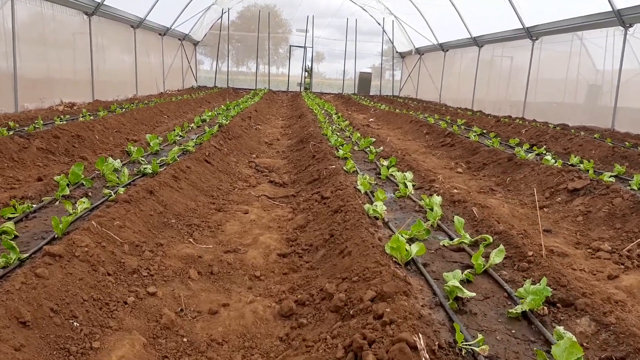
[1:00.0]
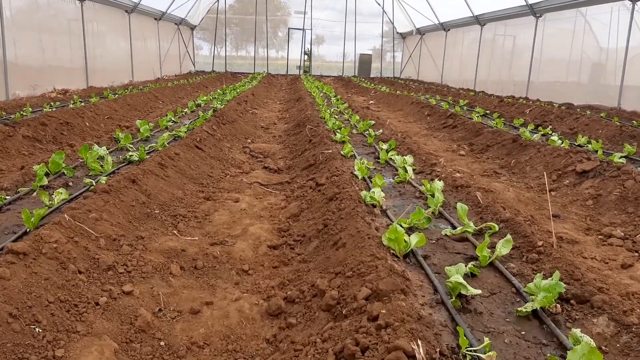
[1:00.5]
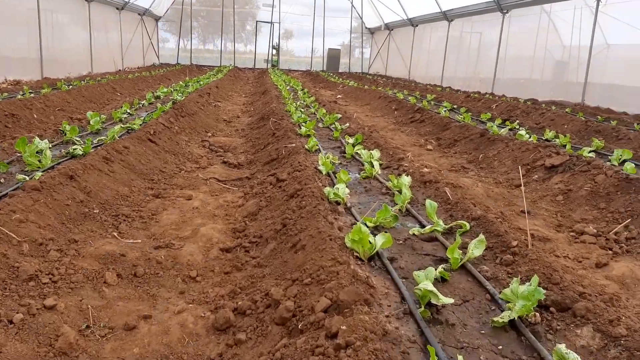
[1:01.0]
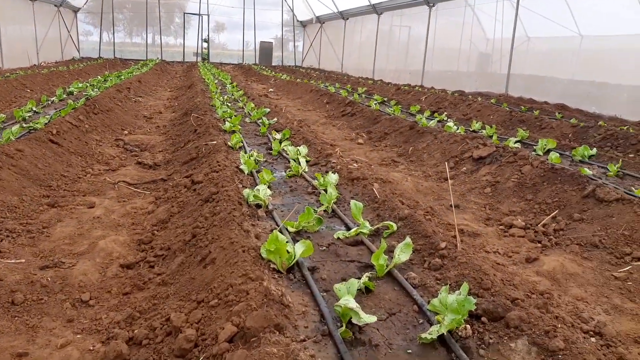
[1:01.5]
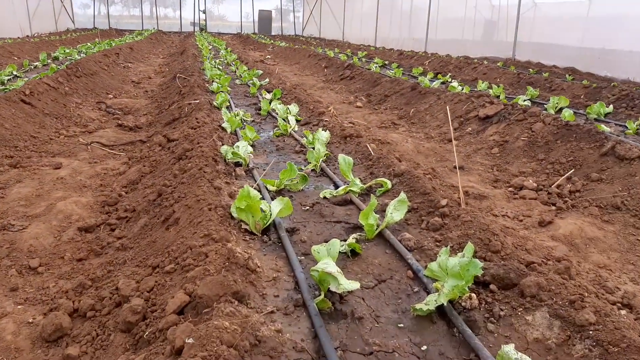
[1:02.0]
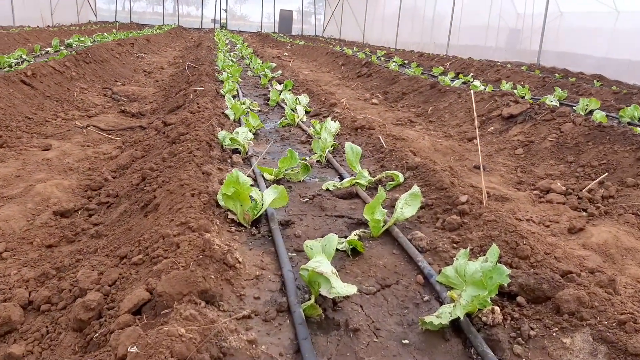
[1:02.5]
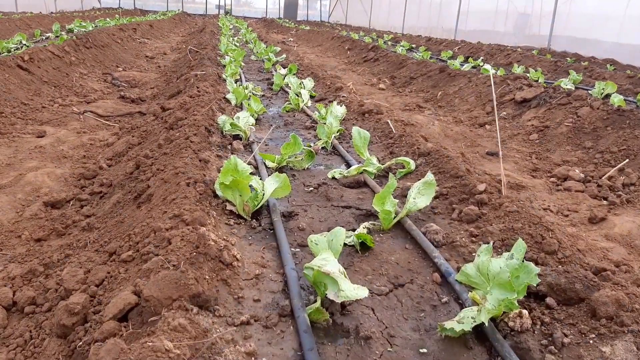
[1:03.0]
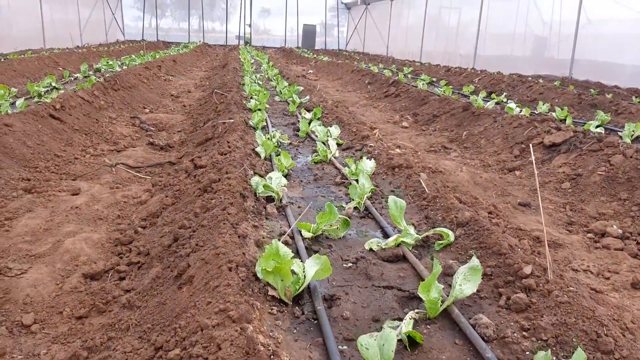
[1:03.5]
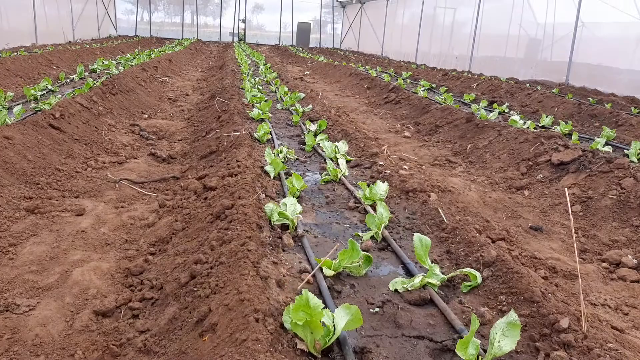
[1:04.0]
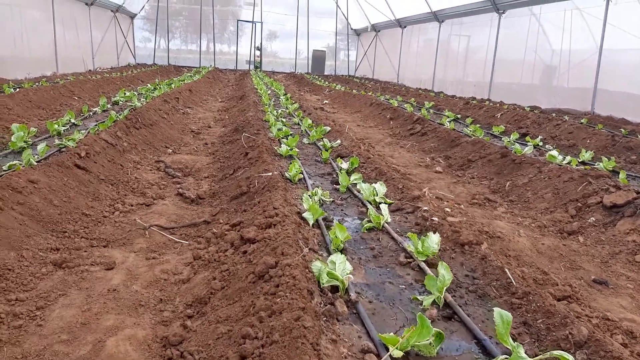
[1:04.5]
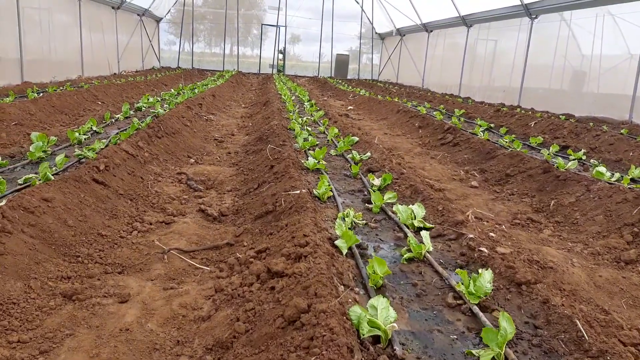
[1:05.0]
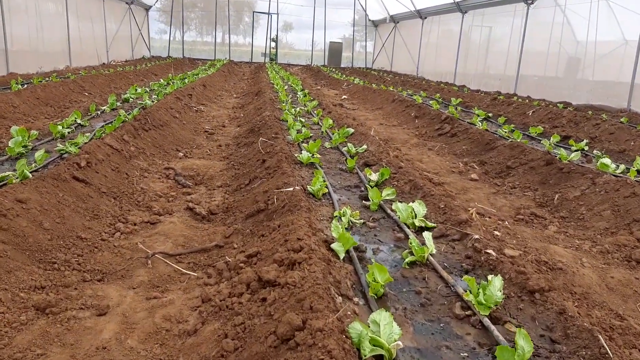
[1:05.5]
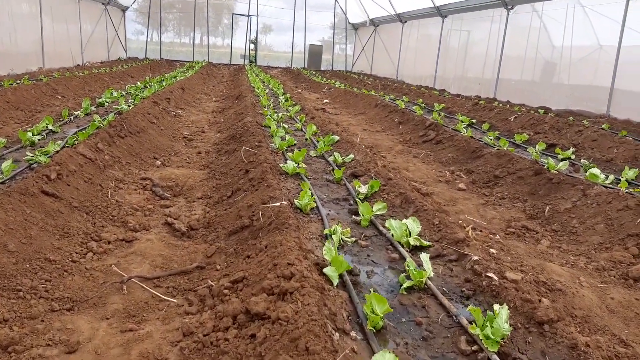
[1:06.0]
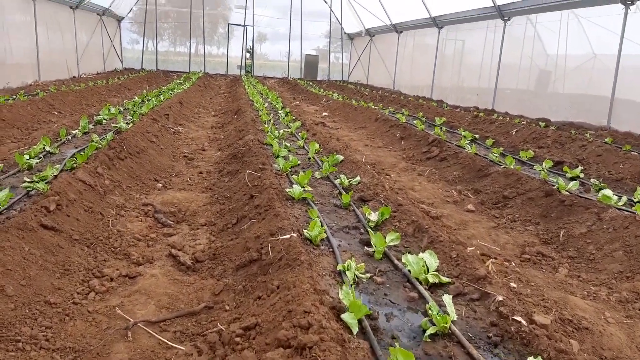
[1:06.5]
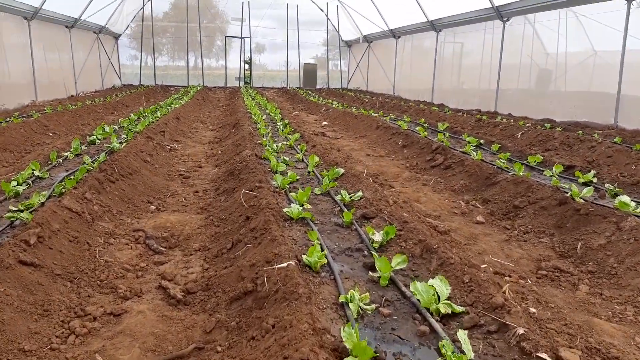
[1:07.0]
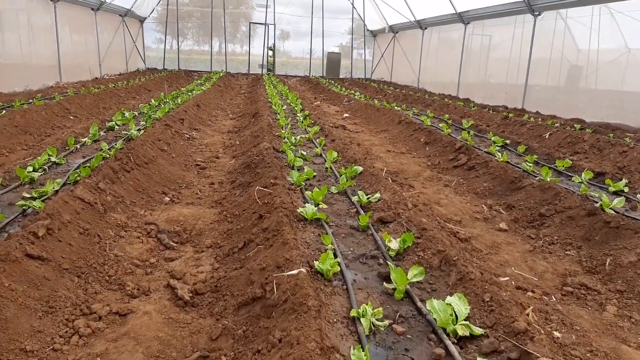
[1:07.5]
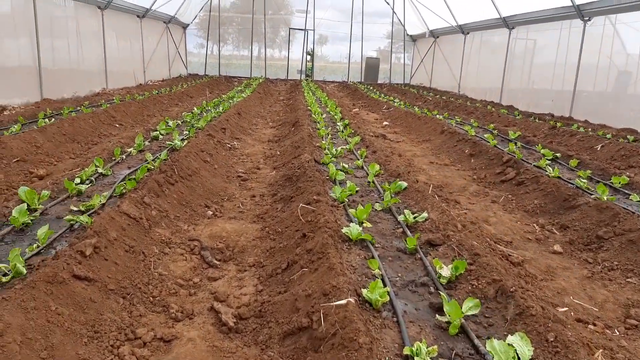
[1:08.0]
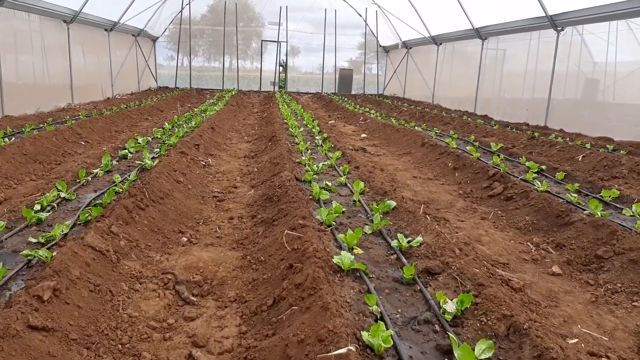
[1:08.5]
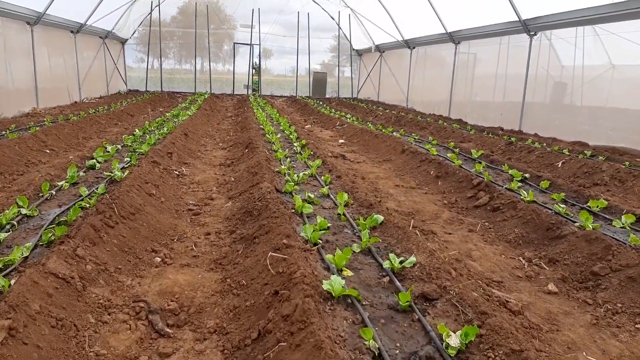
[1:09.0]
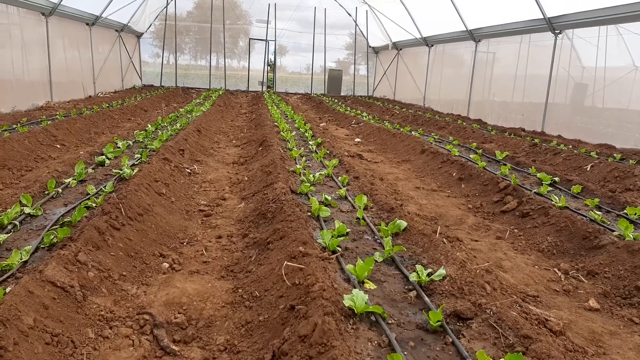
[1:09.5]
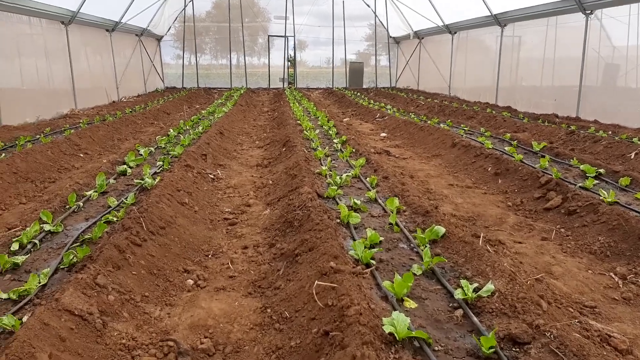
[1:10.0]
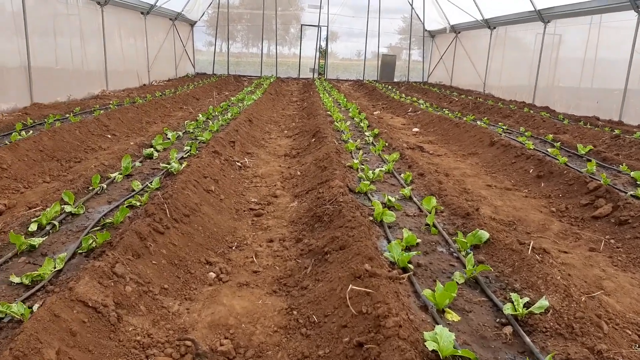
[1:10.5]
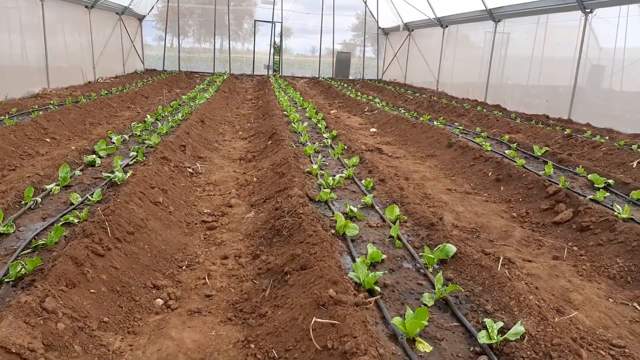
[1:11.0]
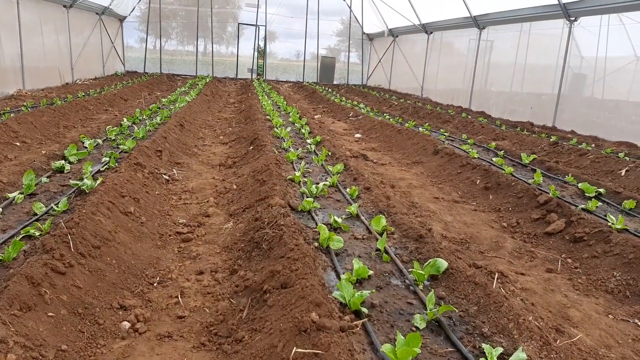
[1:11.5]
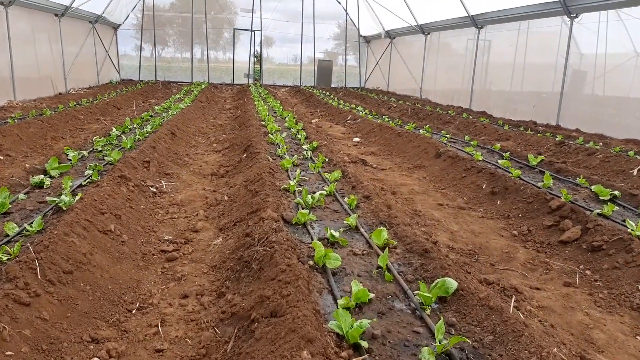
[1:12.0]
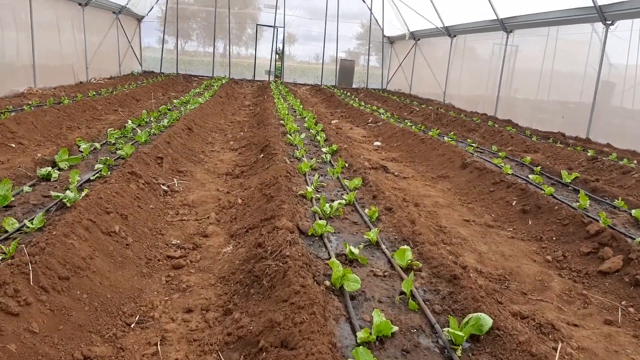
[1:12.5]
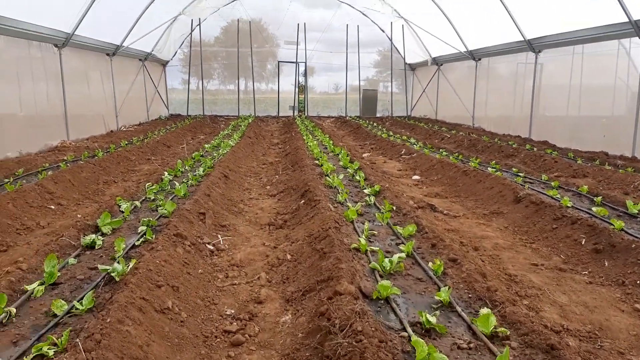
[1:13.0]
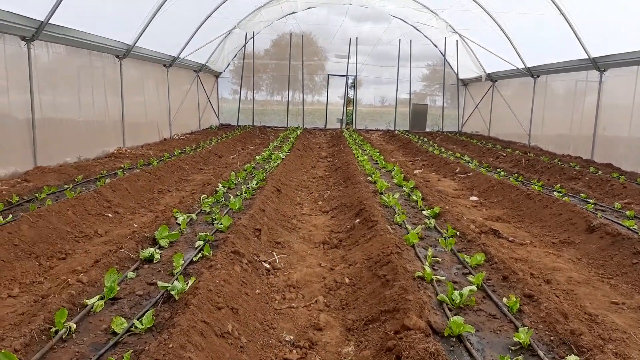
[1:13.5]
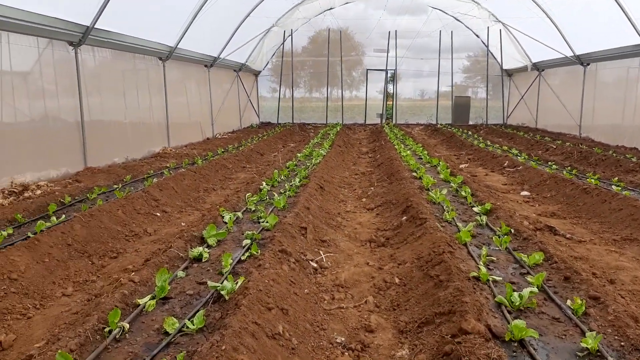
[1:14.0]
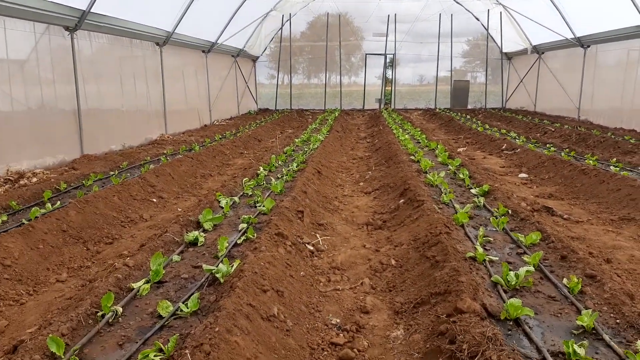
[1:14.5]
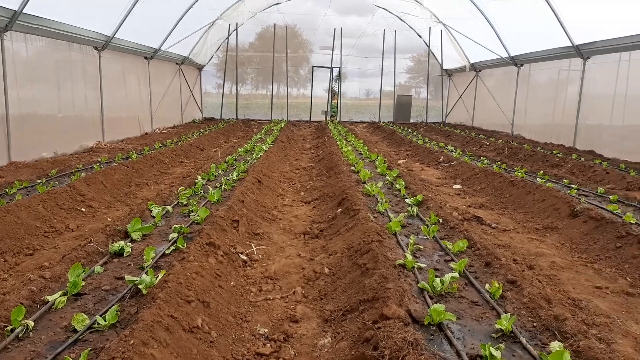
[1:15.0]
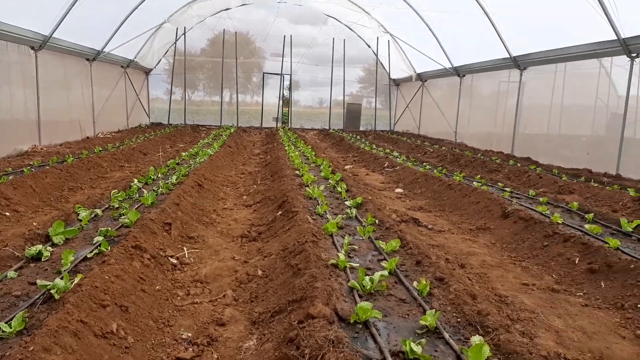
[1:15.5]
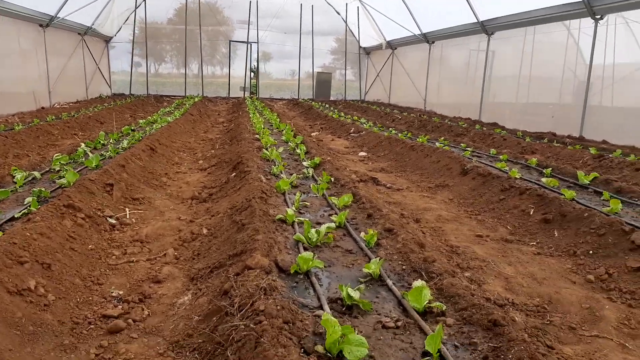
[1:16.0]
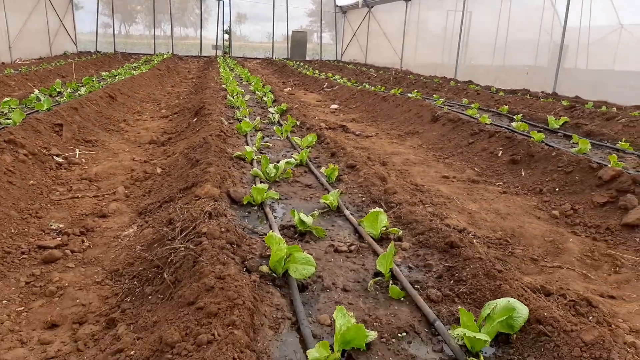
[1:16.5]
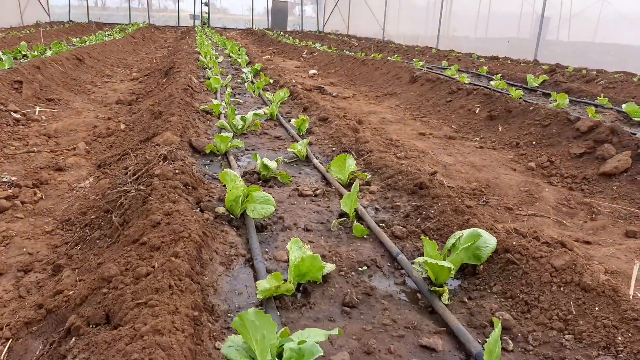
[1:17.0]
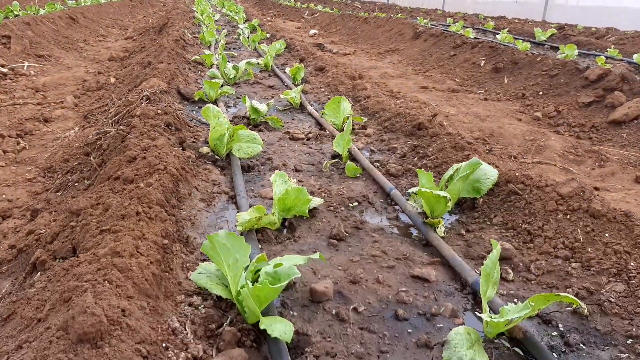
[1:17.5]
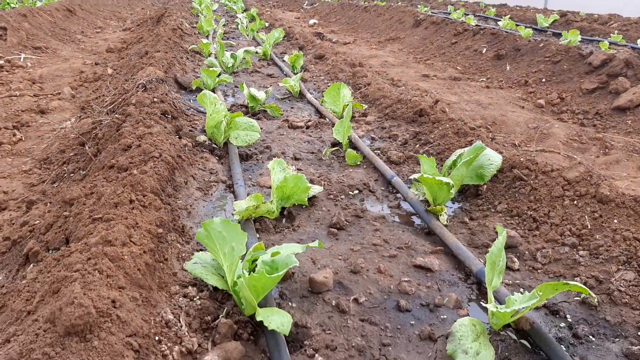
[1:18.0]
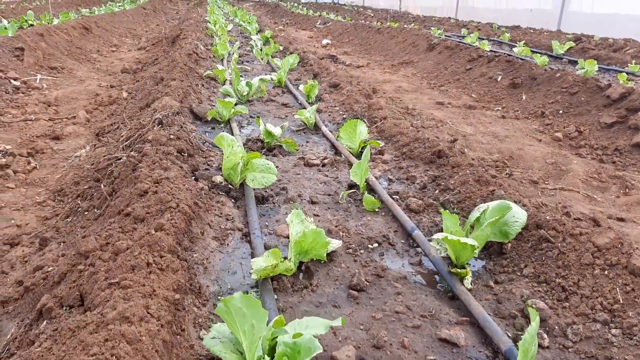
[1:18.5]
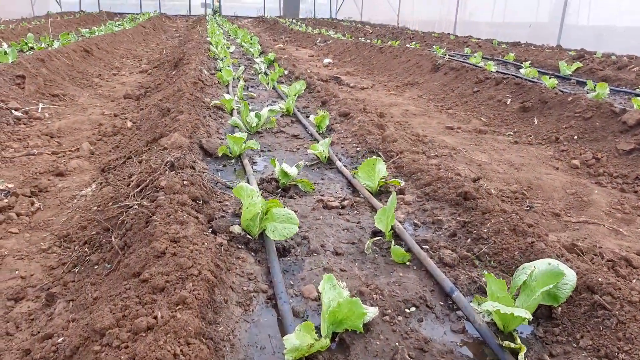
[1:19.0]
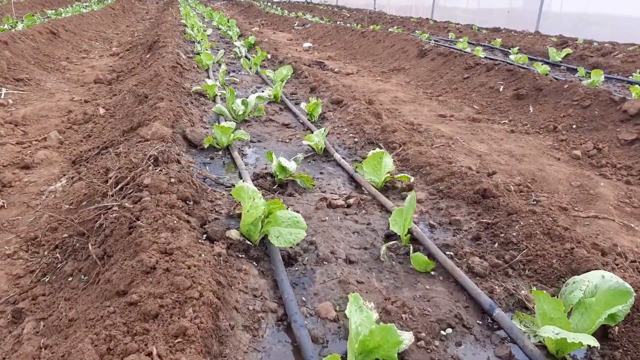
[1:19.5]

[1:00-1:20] A cameraman inside a greenhouse walks very slowly, in small steps, from one end of the greenhouse toward the other. Four rows of planted vegetation are visible, about four inches in height each. All the plants appear to be the same, with the same leaf style and size, and they are spaced apart uniformly. A black lining of the kind used to deter weeds runs underneath the plants along the lengths of the seedlings. Between each row of plants there is a row of dirt, also of equal, uniform measurements, spanning the length of the greenhouse. It is daytime, and it does not appear to be a bright, sunny day but more of a dreary one. The view is a little hard to see clearly because of the transparent covering of the greenhouse. Gray poles make up the structure of the greenhouse. There are no other plants in the greenhouse besides the ones that look the same.